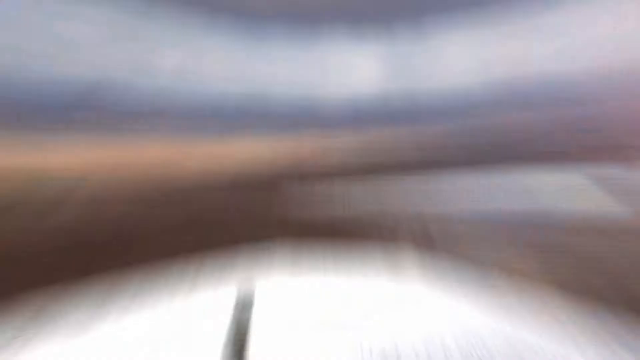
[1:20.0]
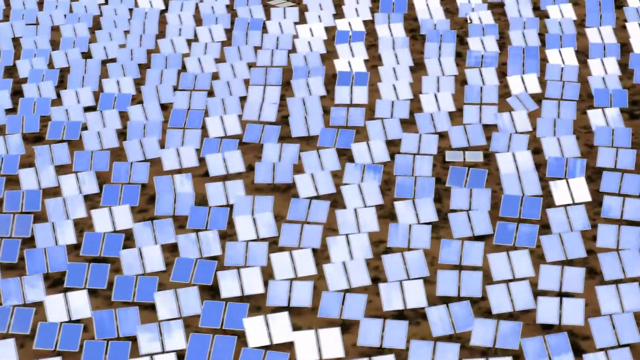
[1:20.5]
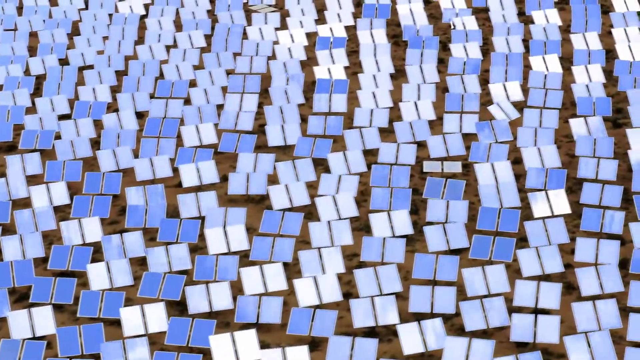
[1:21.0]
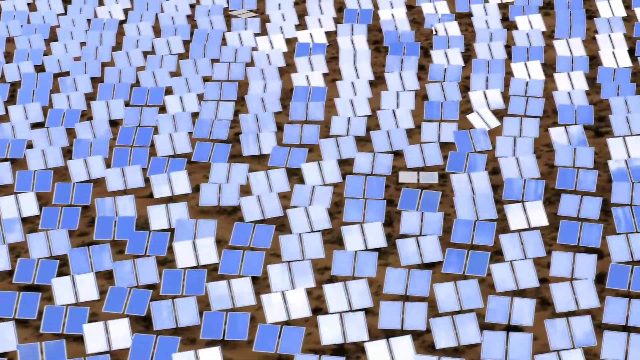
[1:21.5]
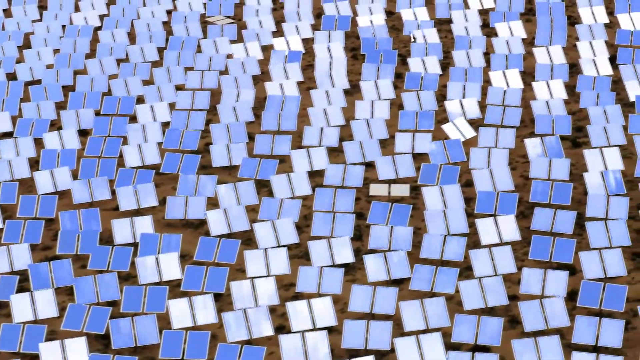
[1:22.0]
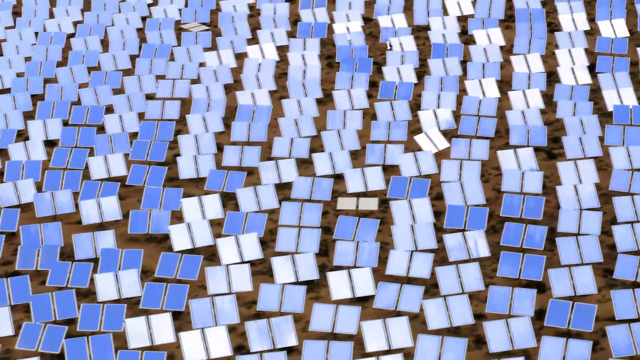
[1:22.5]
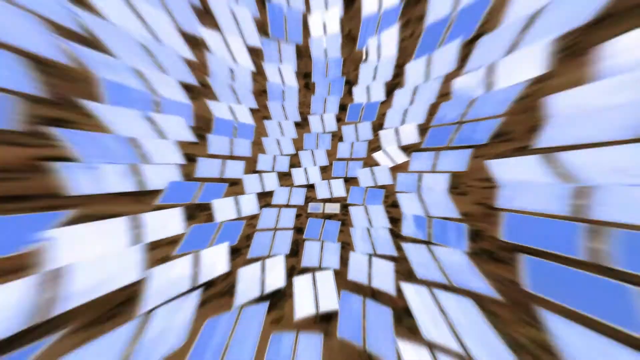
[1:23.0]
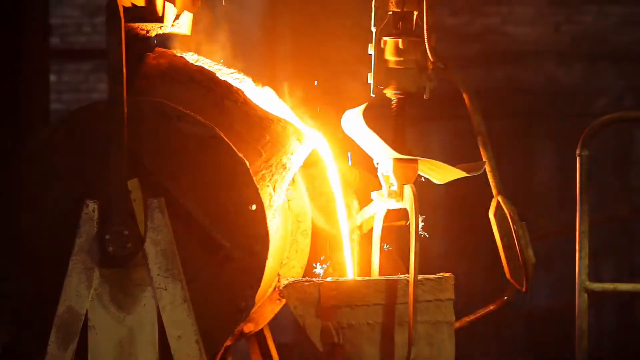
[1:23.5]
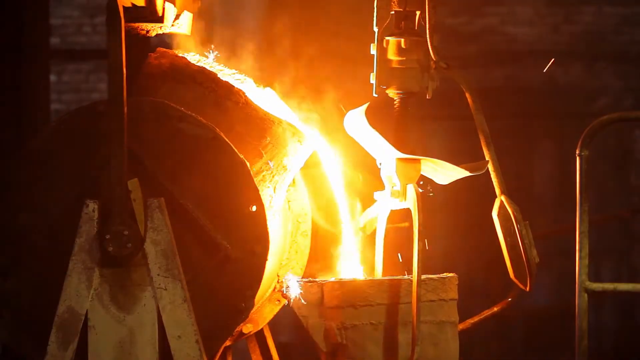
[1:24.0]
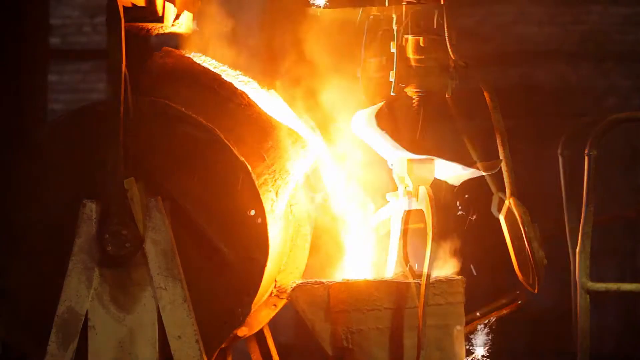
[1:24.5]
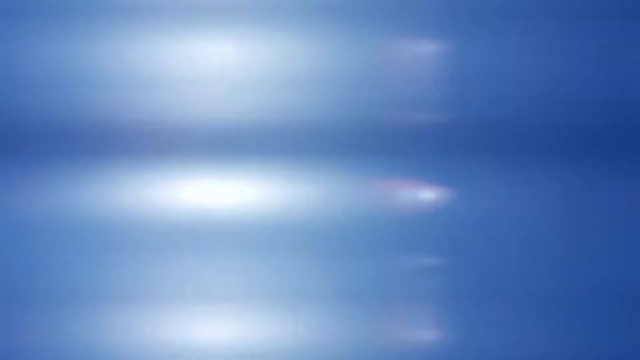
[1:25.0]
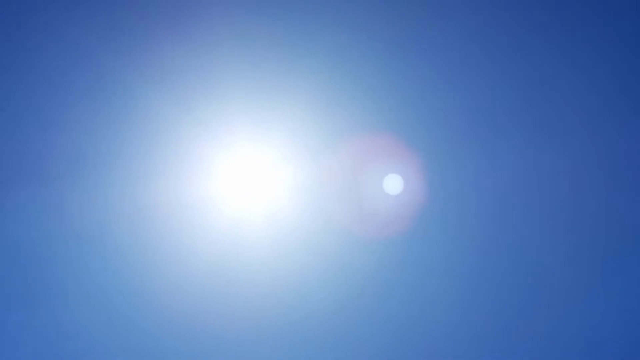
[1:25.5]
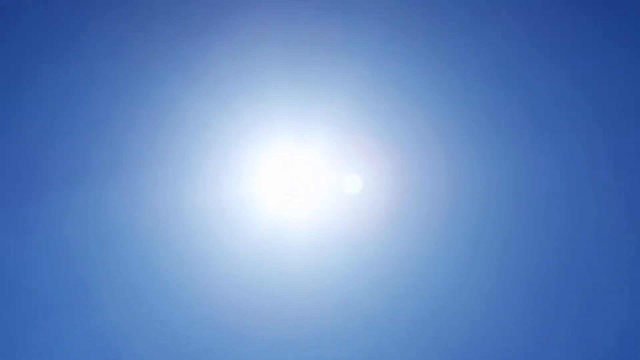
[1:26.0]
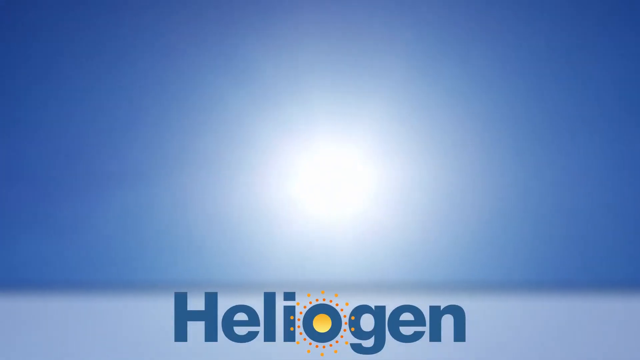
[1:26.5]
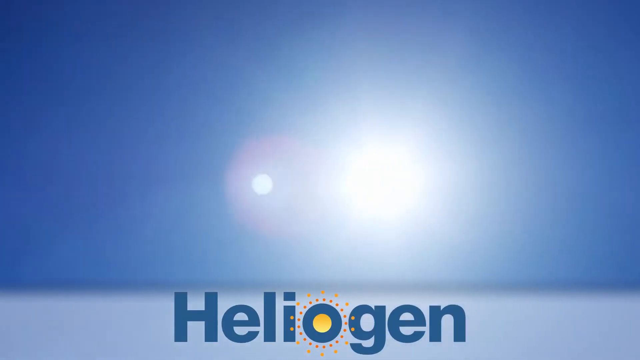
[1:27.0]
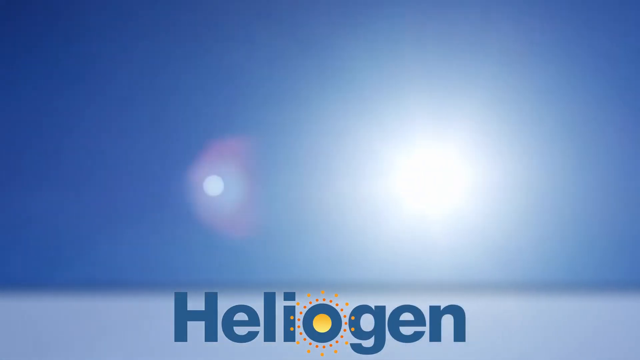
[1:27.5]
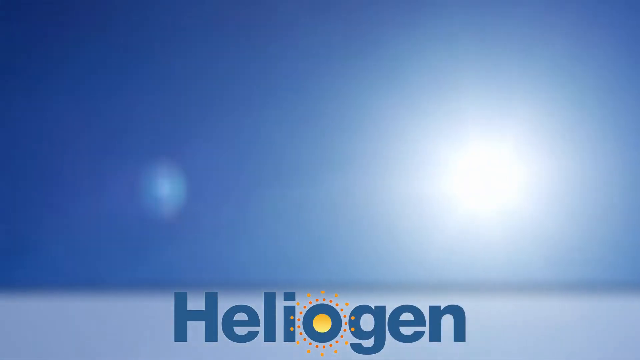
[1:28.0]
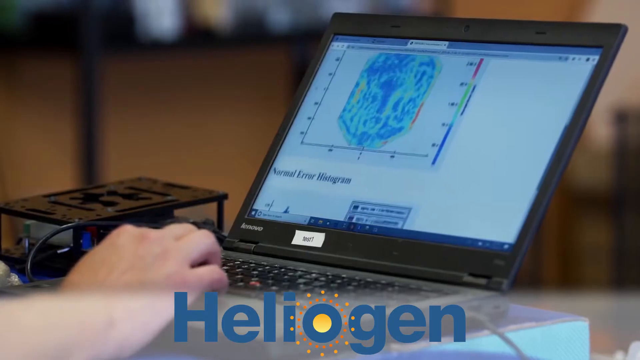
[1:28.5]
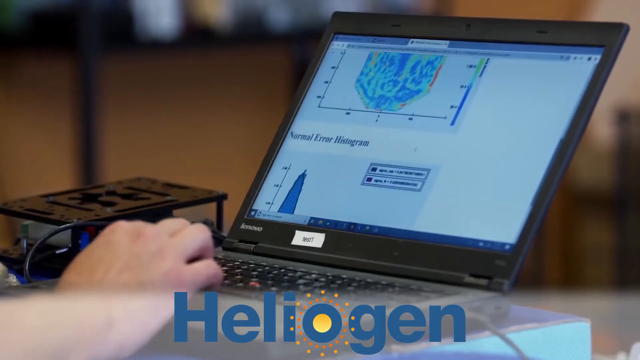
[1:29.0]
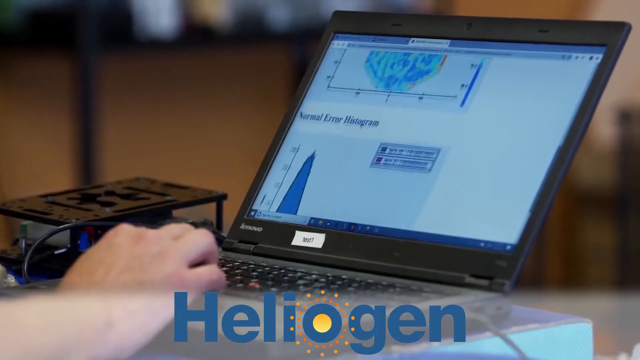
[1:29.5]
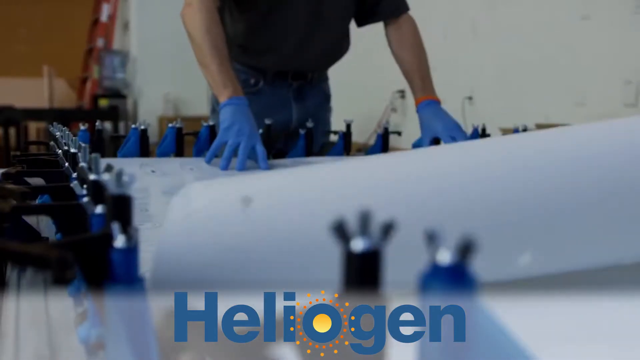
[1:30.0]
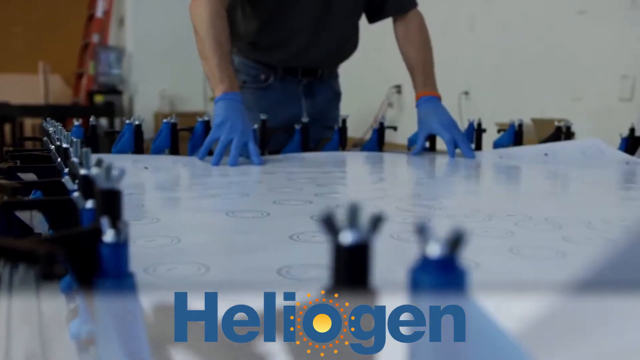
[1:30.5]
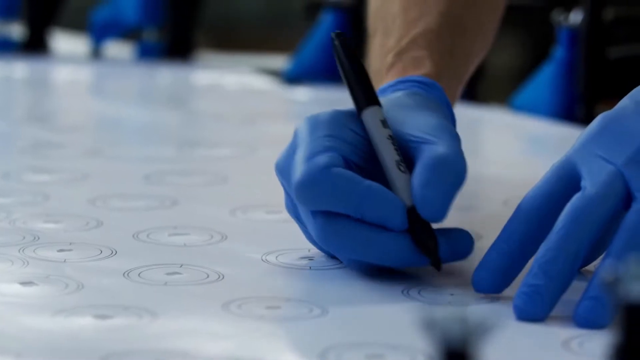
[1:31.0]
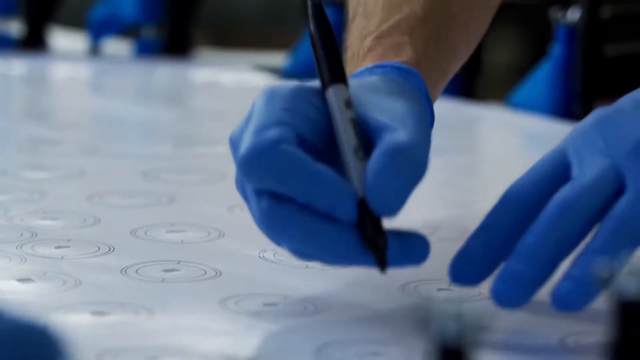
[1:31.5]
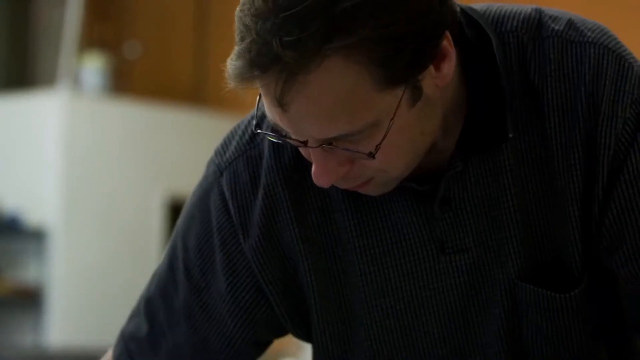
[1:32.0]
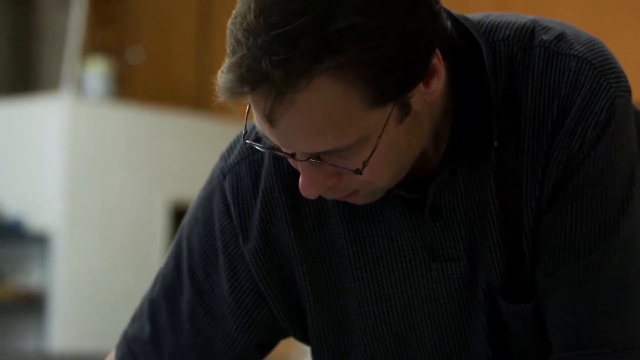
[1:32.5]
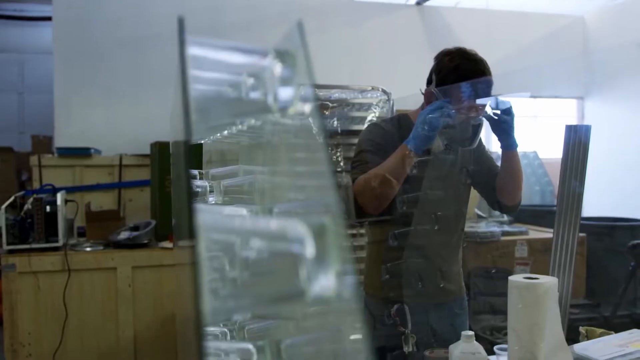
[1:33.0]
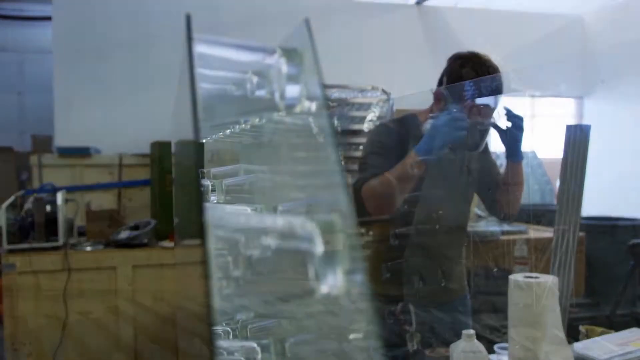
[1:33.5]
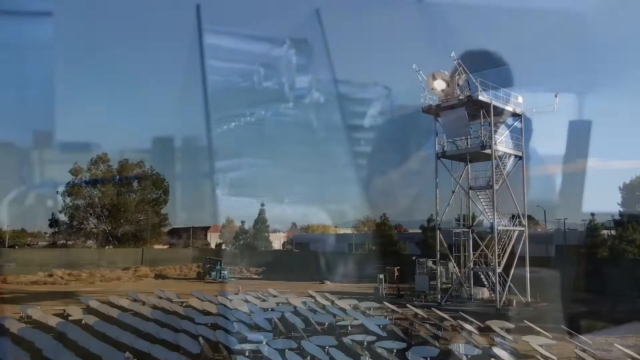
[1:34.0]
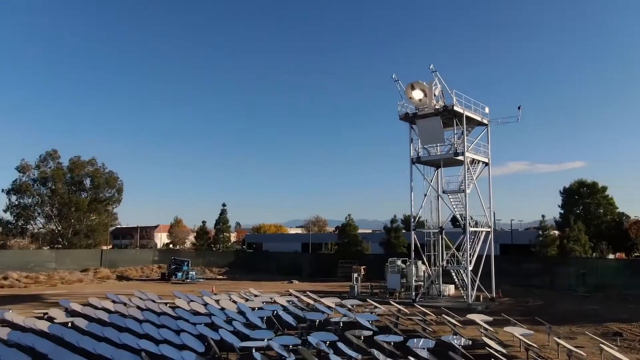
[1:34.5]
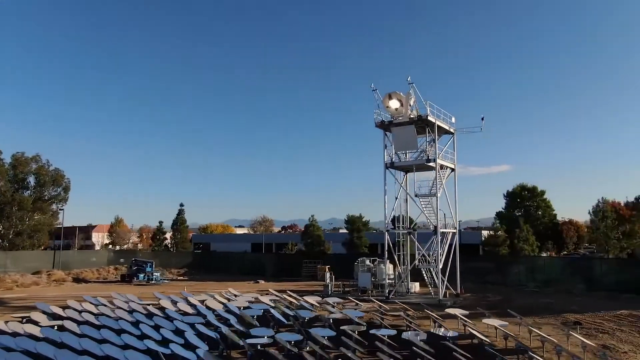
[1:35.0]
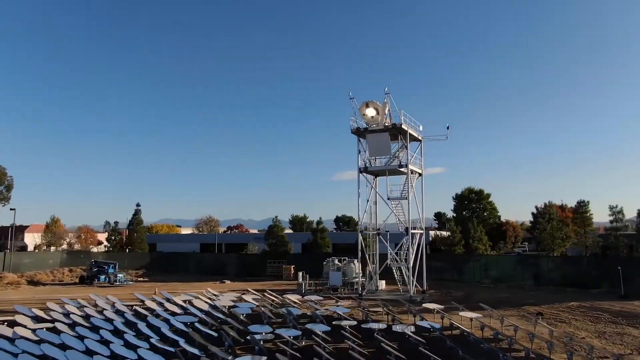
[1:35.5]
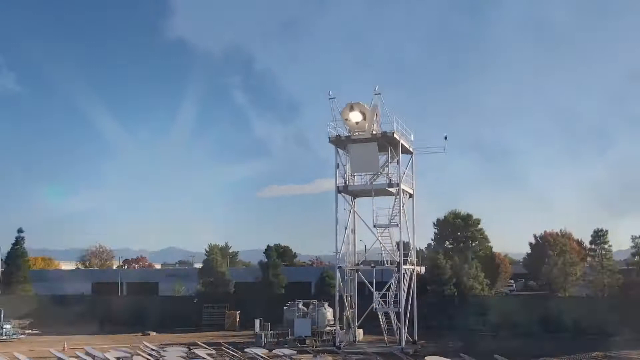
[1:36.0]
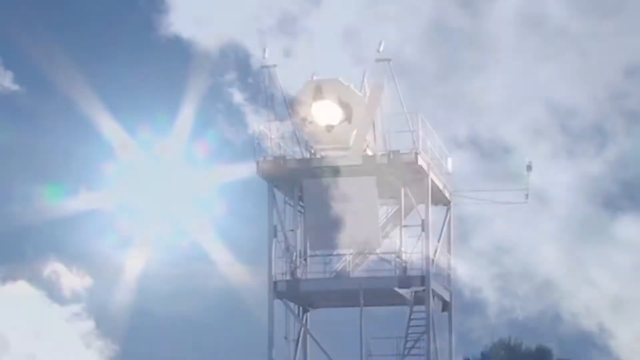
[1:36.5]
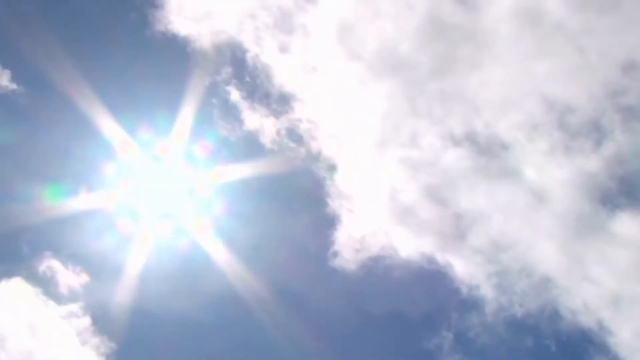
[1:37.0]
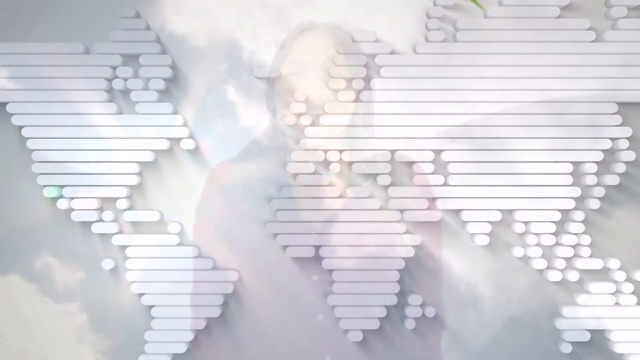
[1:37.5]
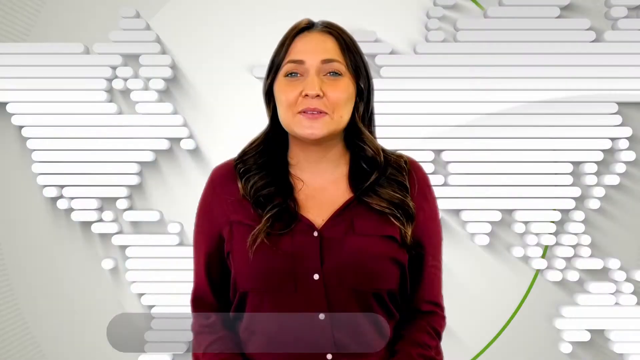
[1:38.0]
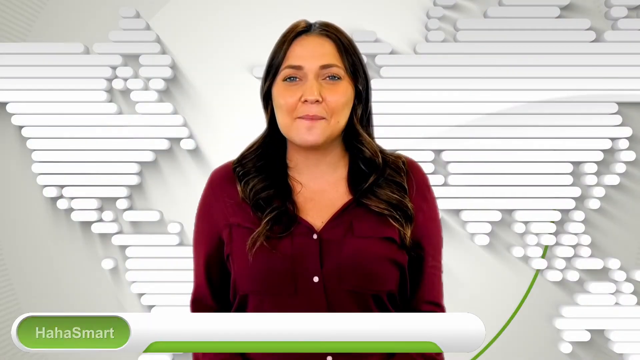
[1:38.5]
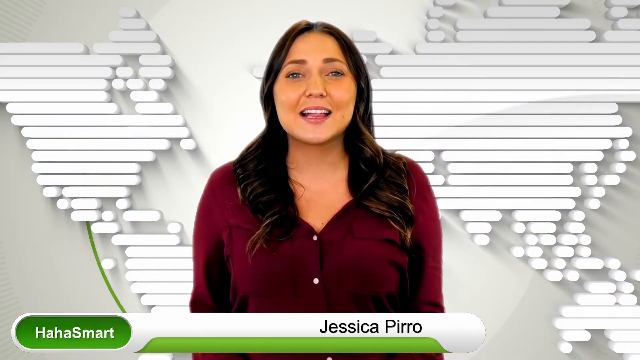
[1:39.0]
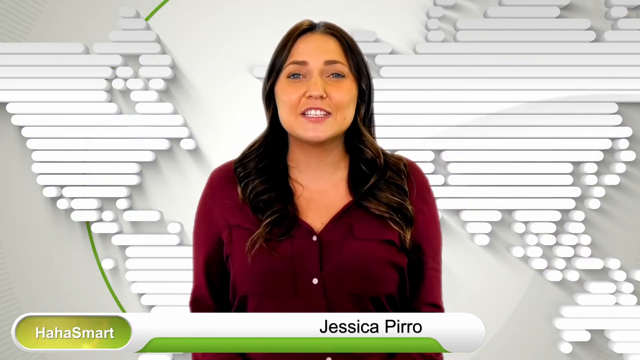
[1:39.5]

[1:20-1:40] A picture of an airplane is shown.